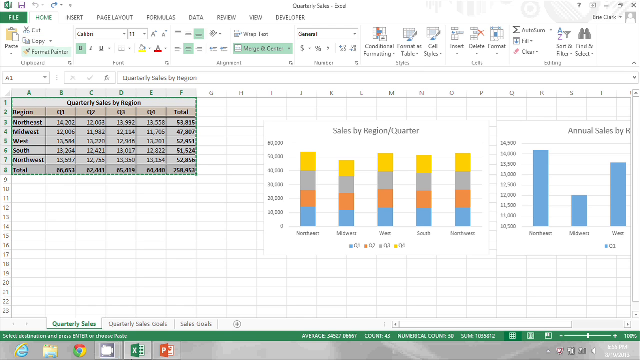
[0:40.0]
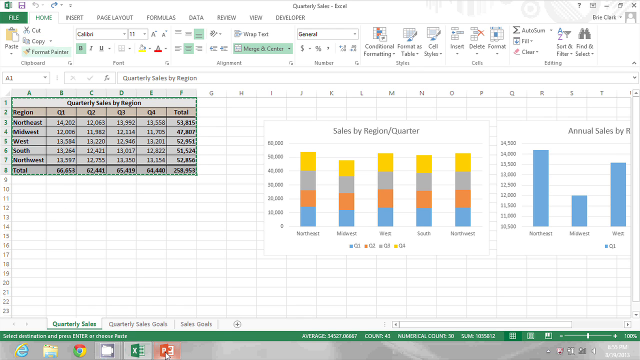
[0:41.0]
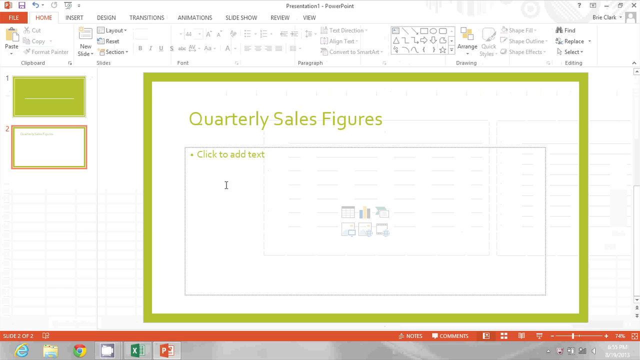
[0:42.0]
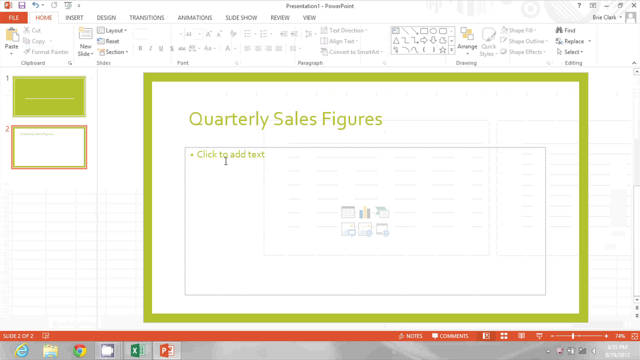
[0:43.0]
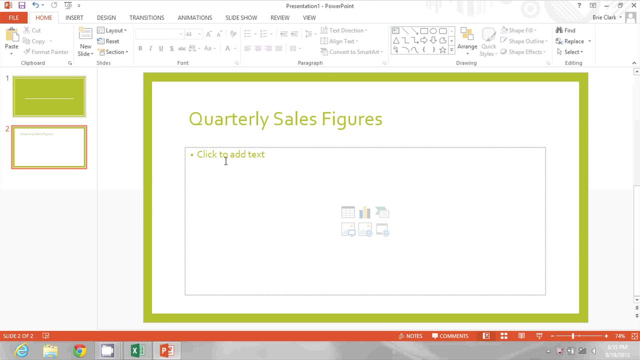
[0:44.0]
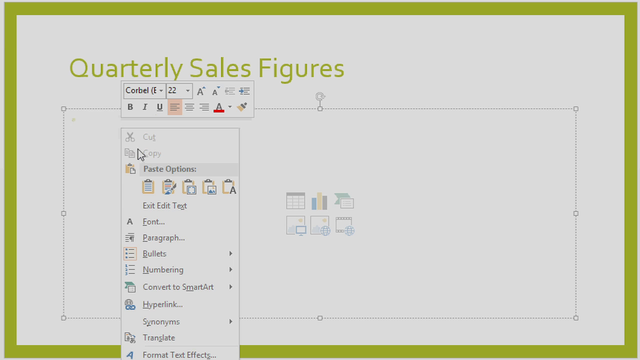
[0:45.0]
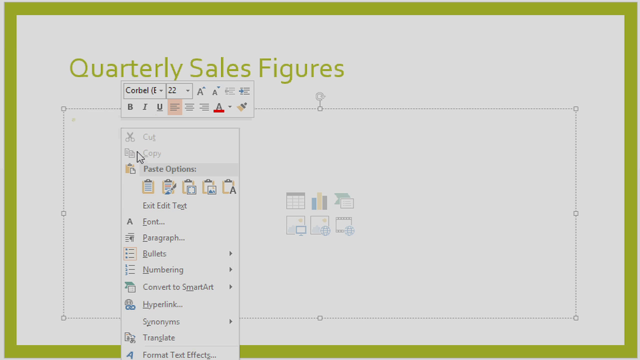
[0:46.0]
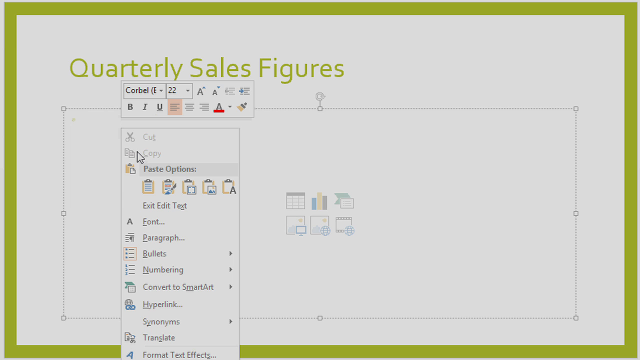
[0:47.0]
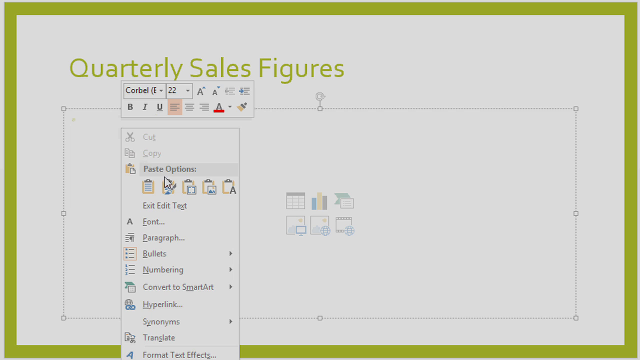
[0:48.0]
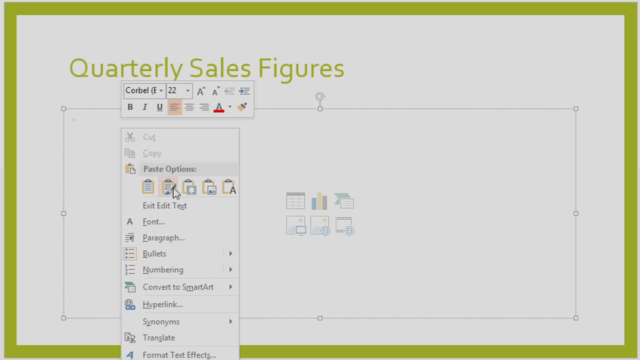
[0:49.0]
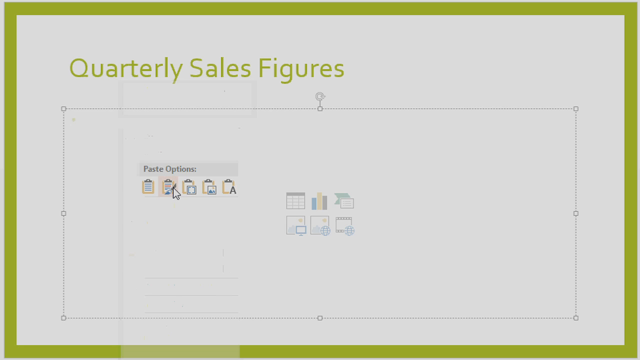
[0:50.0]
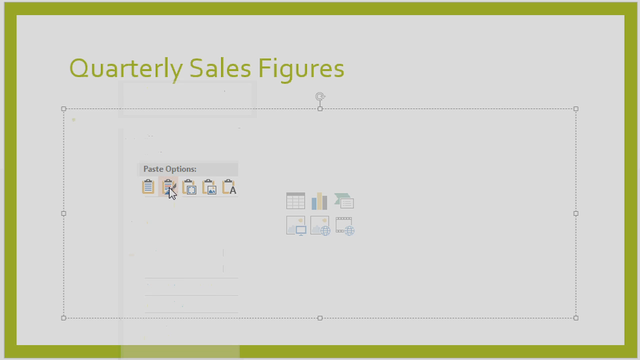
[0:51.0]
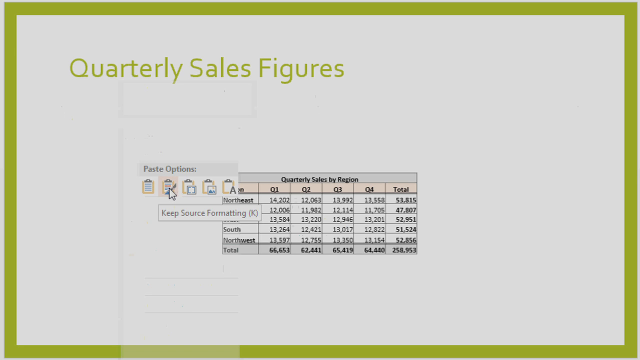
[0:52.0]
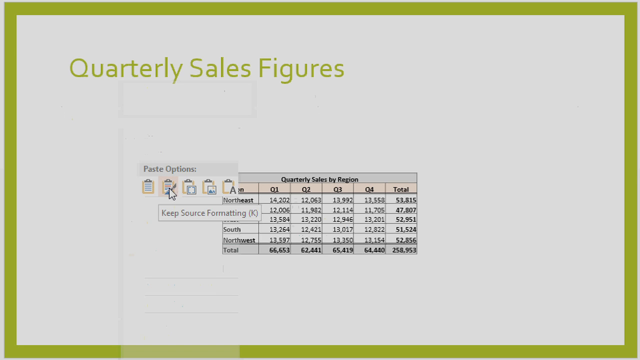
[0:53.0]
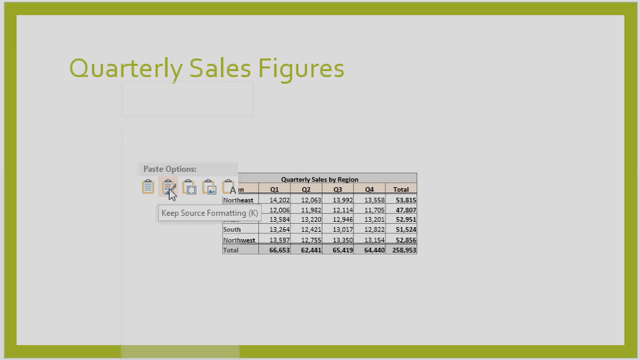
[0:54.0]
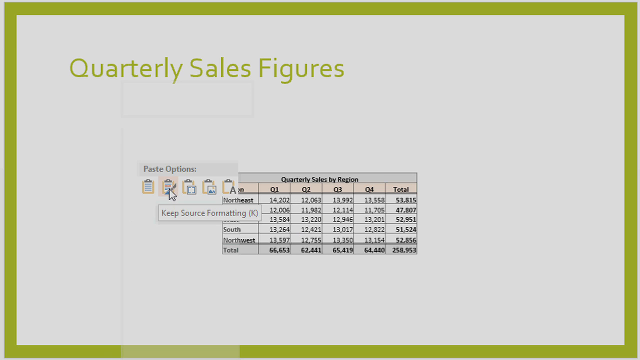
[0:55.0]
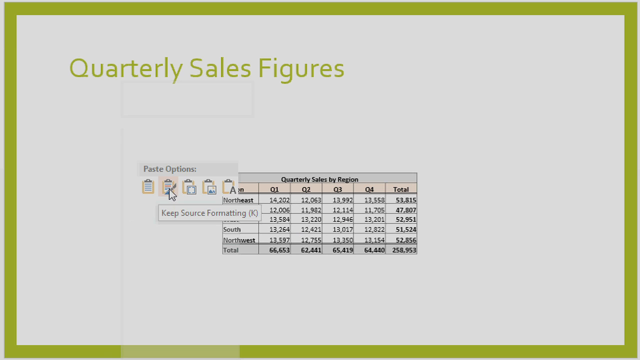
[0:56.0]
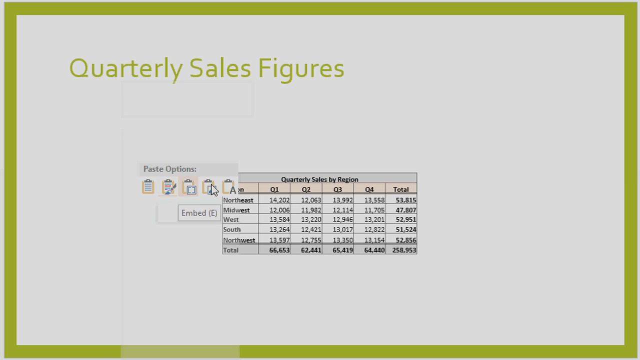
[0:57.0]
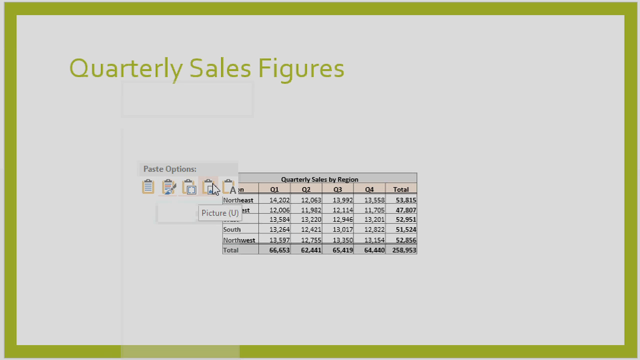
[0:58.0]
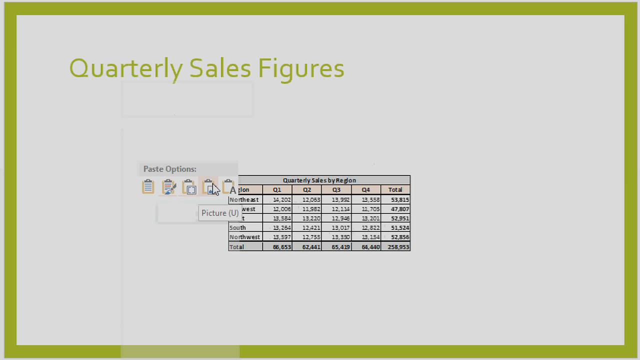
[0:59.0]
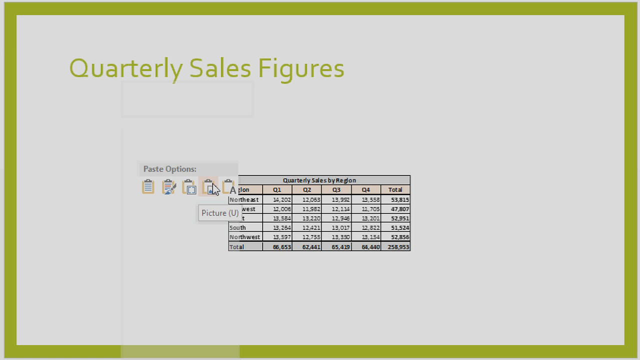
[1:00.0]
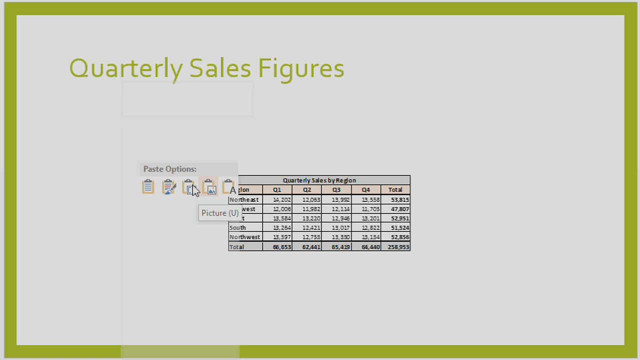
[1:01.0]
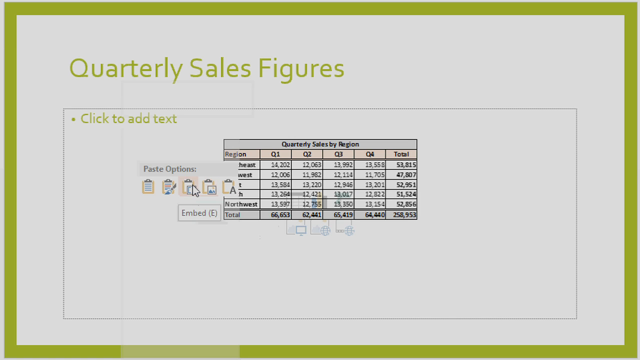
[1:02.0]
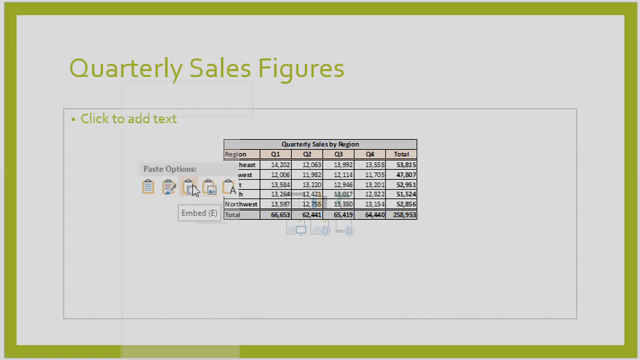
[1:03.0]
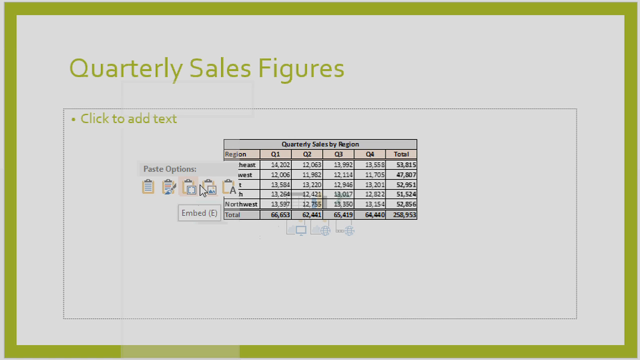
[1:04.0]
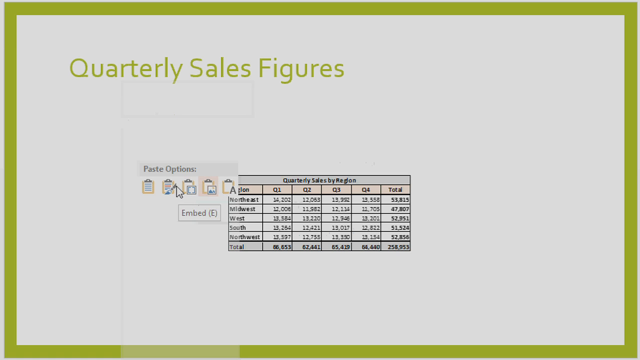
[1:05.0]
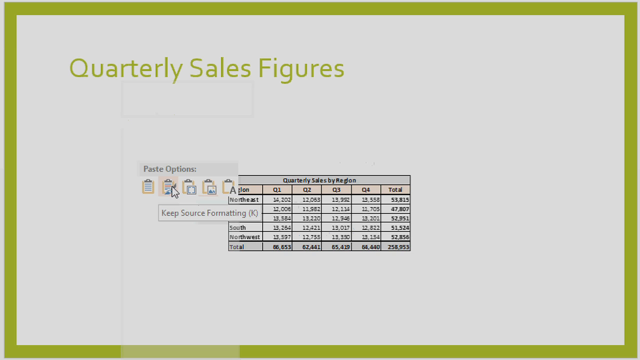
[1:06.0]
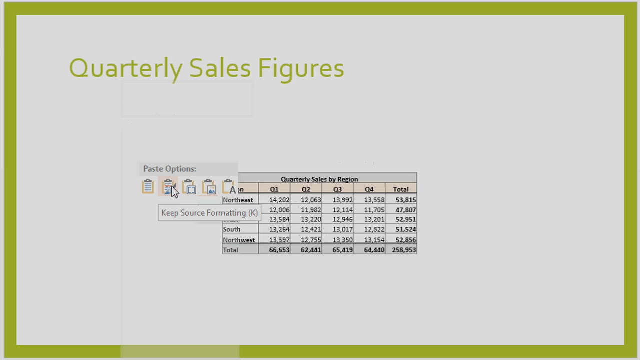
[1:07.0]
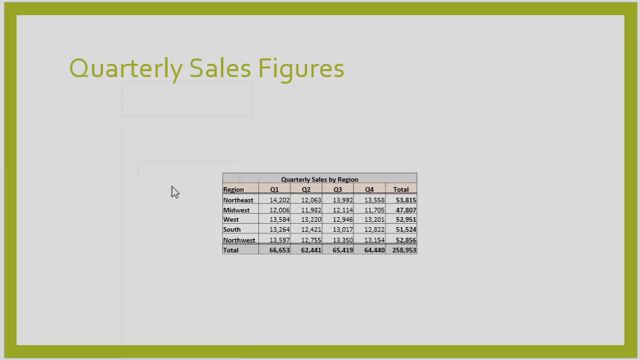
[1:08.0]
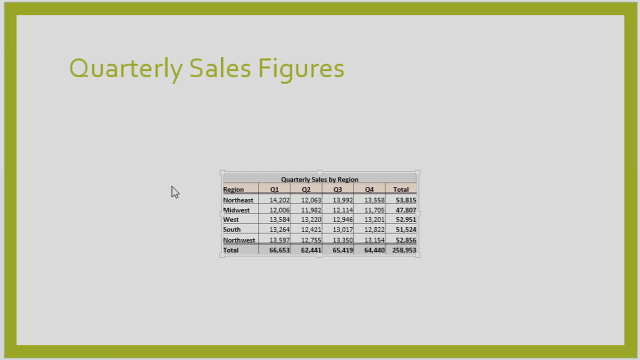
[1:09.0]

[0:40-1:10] Graphs appear on a spreadsheet, with a bar graph on the right side and a number graph on the left side. The next page reads "quarterly sales figures." A cursor moves around the screen through a pop-up, clicks an icon, and paste options appear. A pop-up appears with the graph of numerical figures, reading "embedded." The cursor moves very fast through the selections; the numerical graph apparently is copied and pasted into the spreadsheet, since the spreadsheet is shown again. On the right side are the bar graphs: the first has four colors, blue, orange, gray and yellow, and the second has only light blue vertical bars.